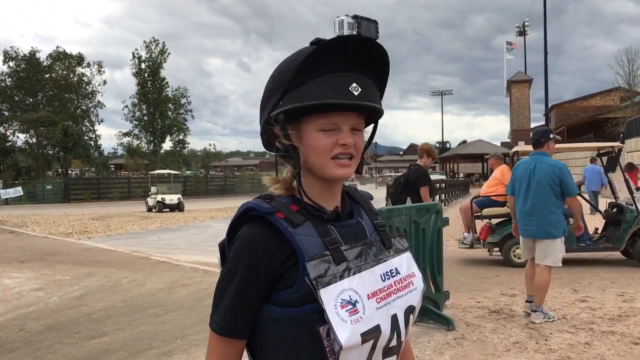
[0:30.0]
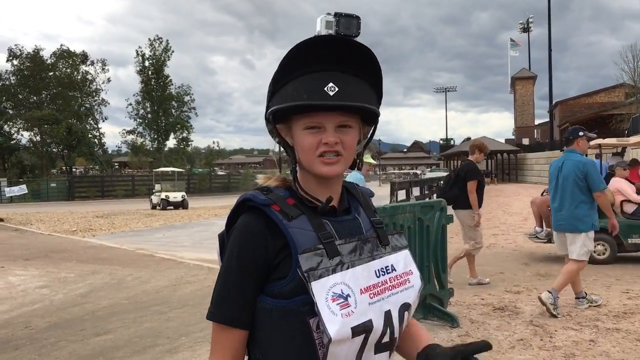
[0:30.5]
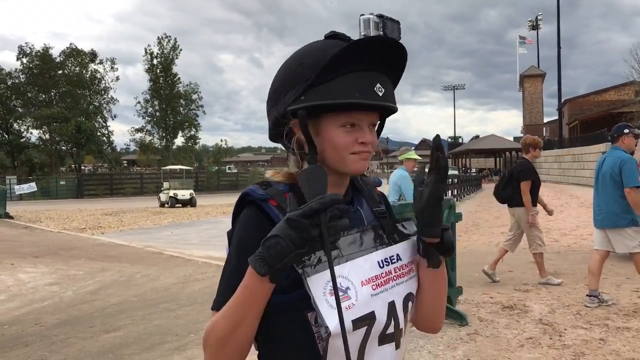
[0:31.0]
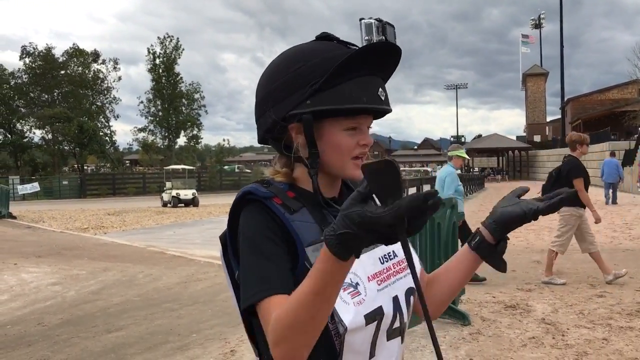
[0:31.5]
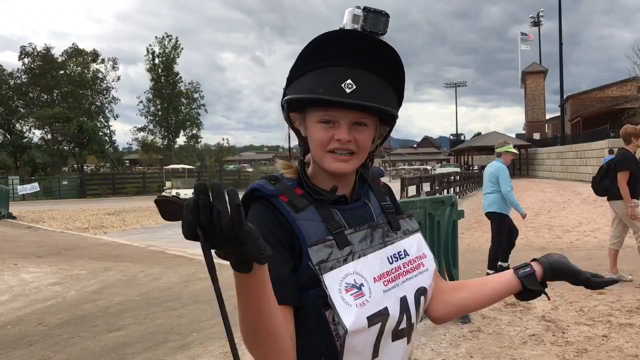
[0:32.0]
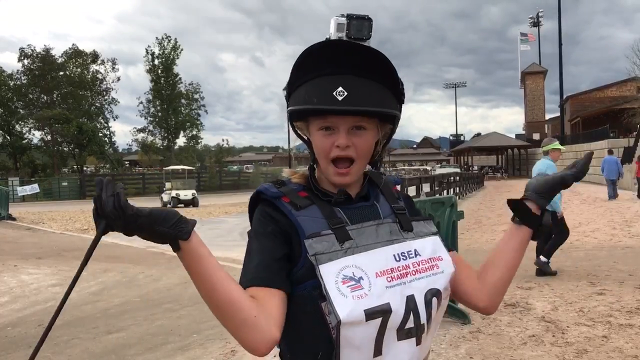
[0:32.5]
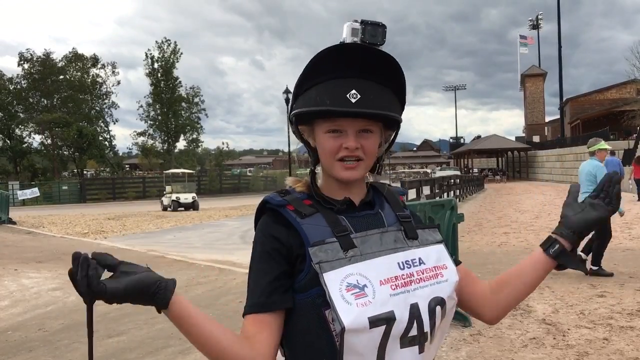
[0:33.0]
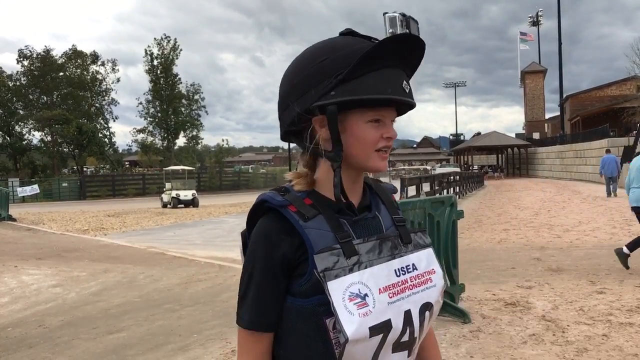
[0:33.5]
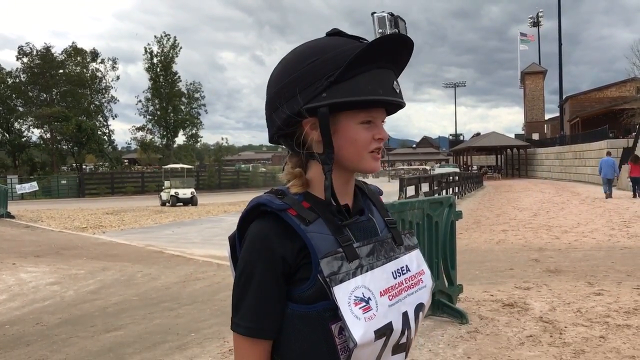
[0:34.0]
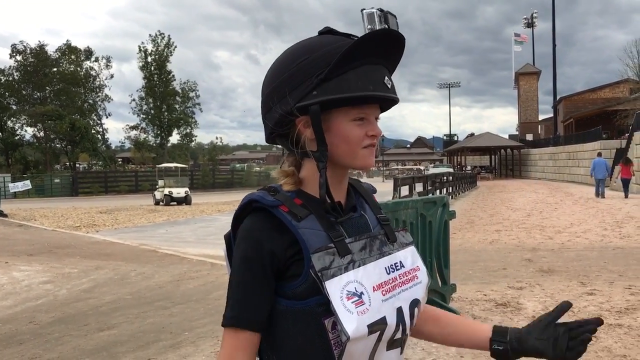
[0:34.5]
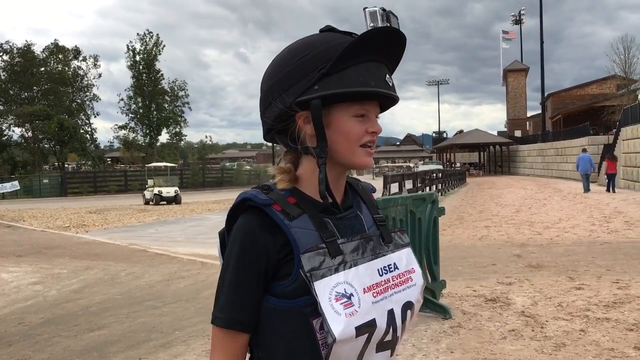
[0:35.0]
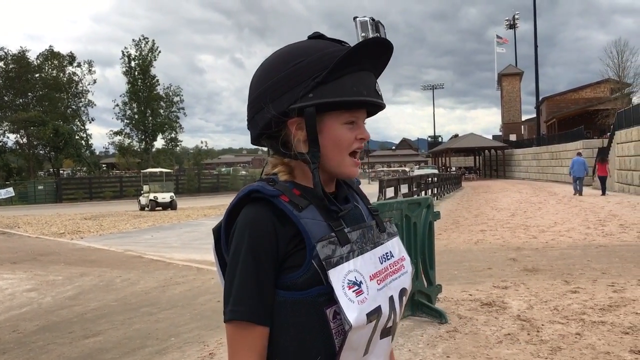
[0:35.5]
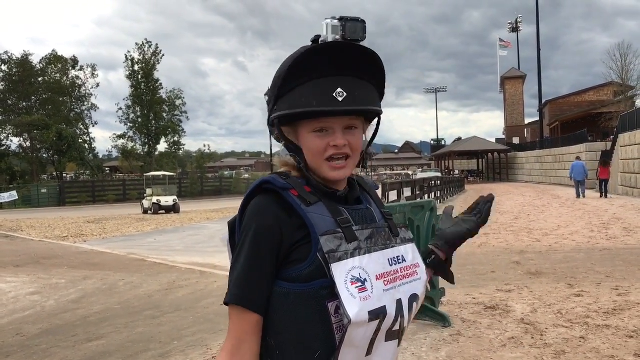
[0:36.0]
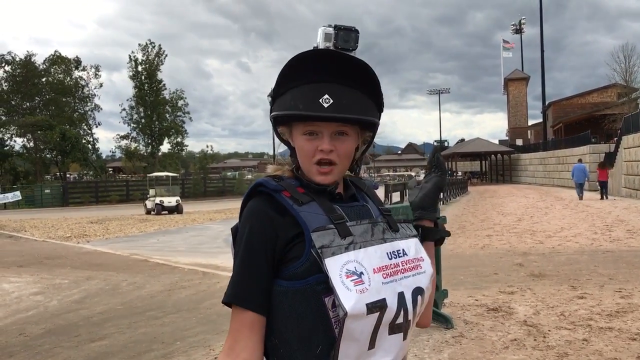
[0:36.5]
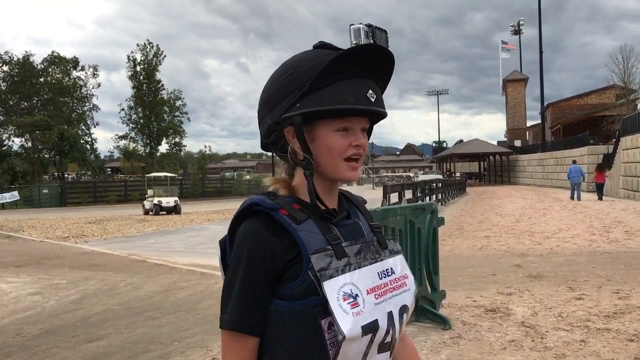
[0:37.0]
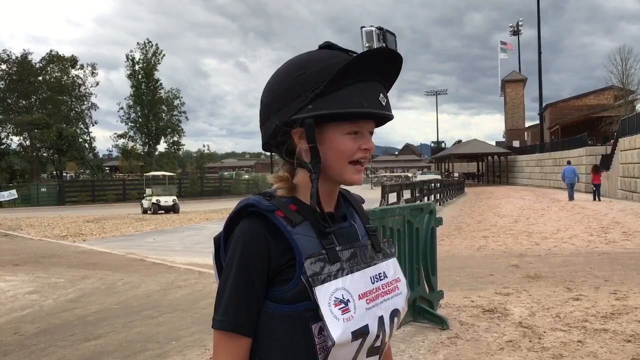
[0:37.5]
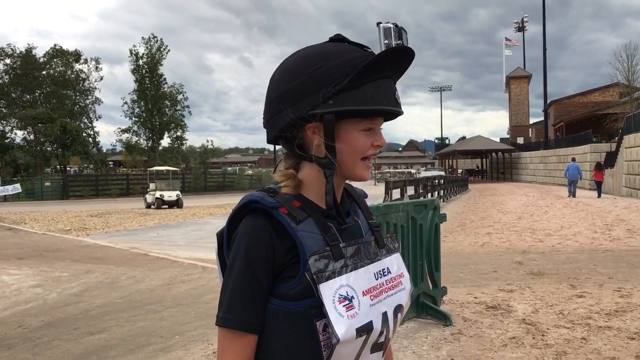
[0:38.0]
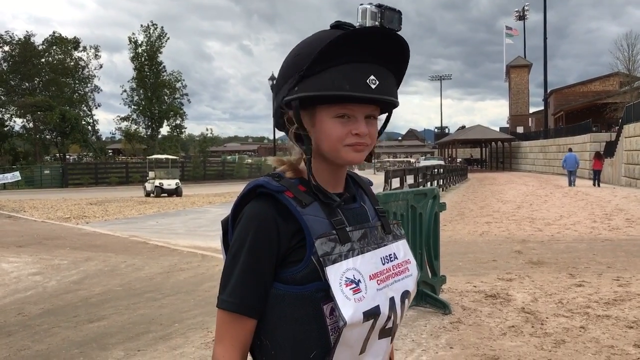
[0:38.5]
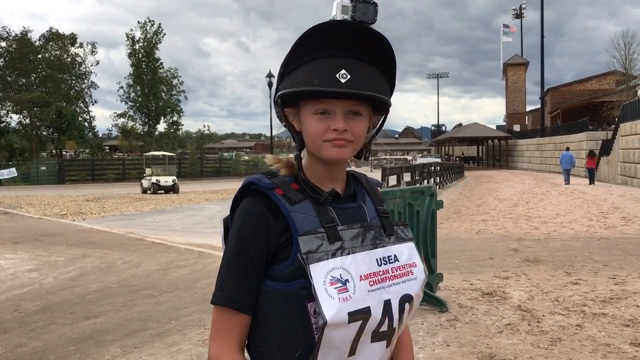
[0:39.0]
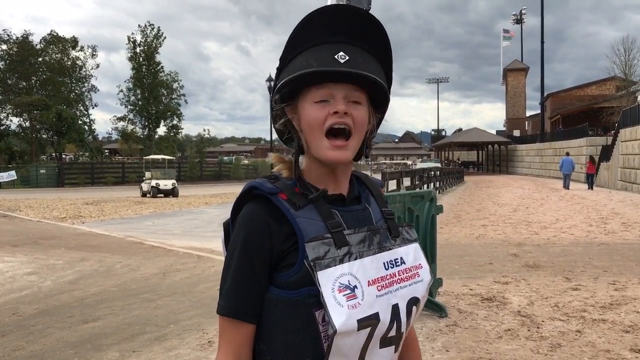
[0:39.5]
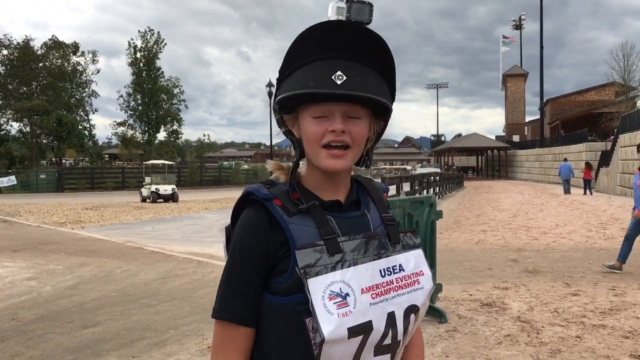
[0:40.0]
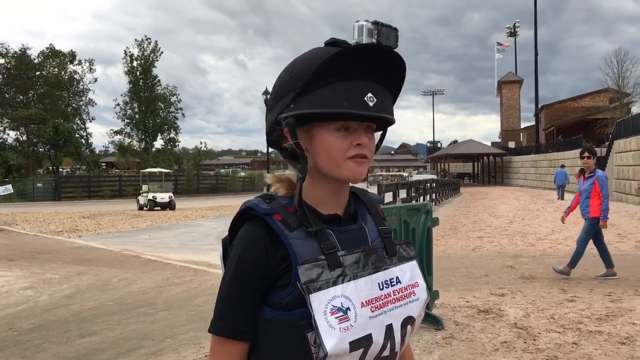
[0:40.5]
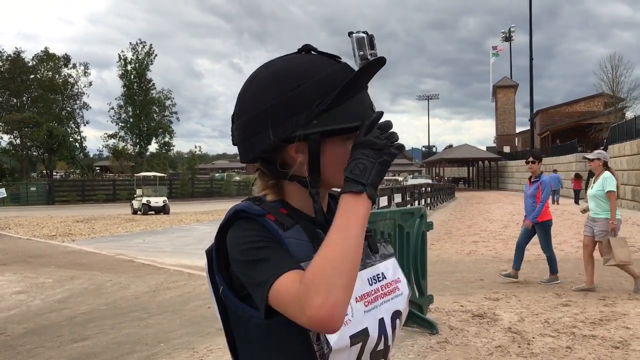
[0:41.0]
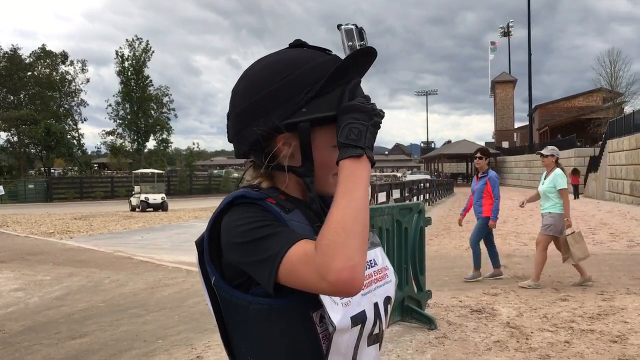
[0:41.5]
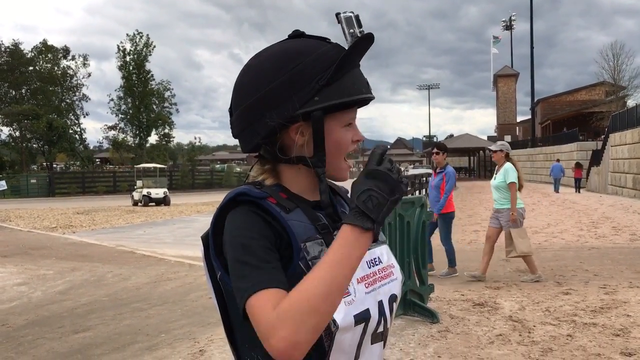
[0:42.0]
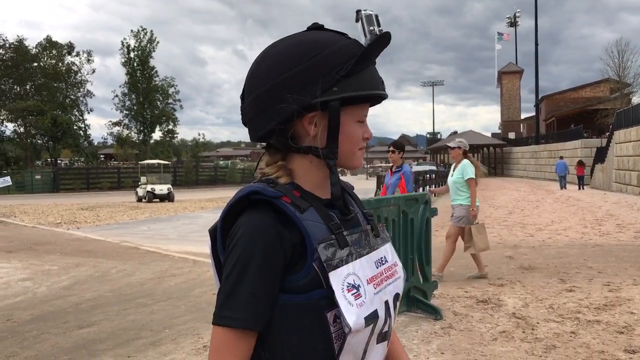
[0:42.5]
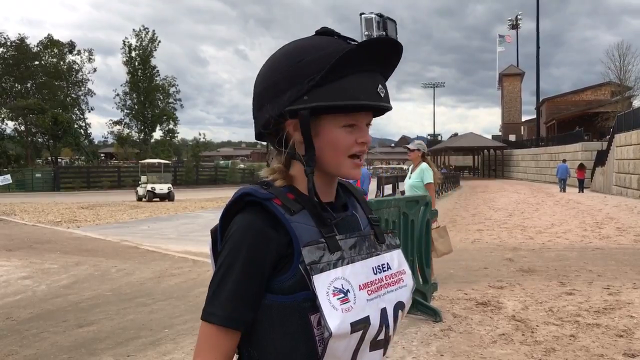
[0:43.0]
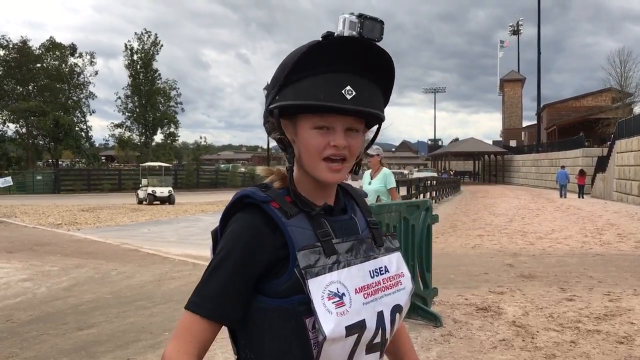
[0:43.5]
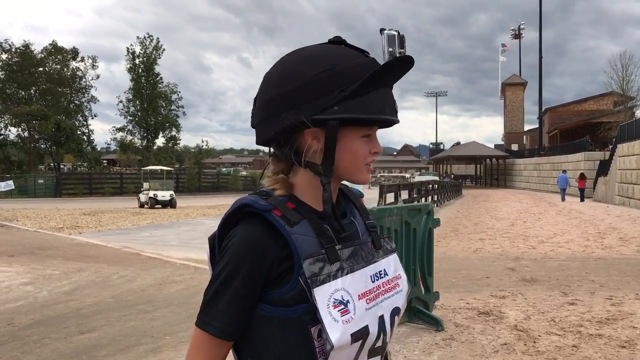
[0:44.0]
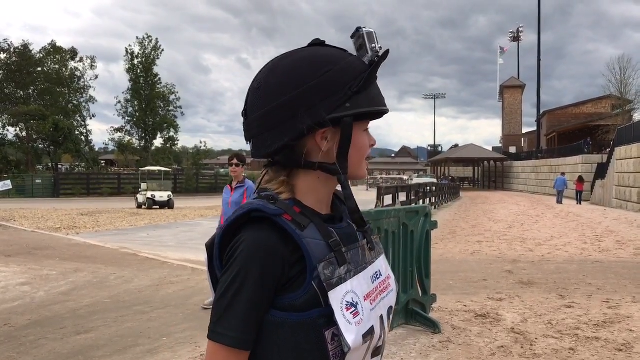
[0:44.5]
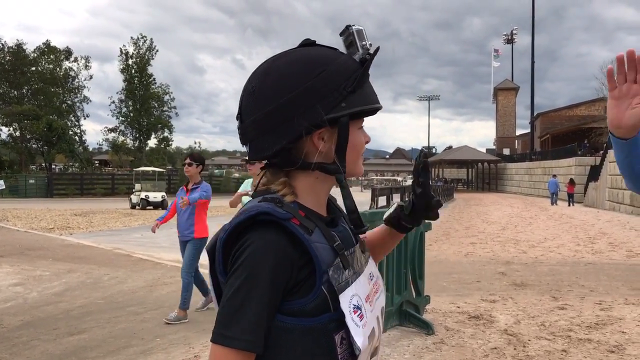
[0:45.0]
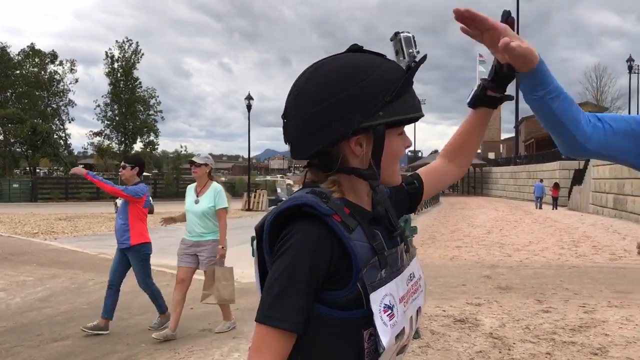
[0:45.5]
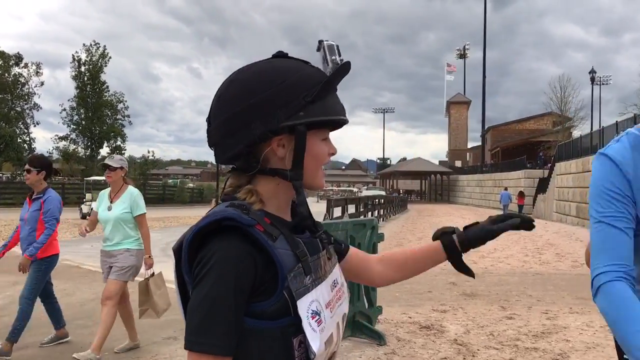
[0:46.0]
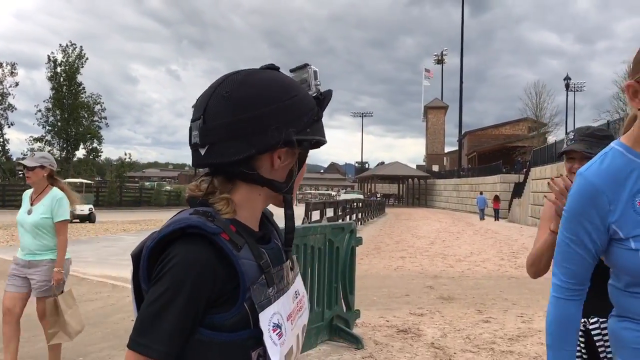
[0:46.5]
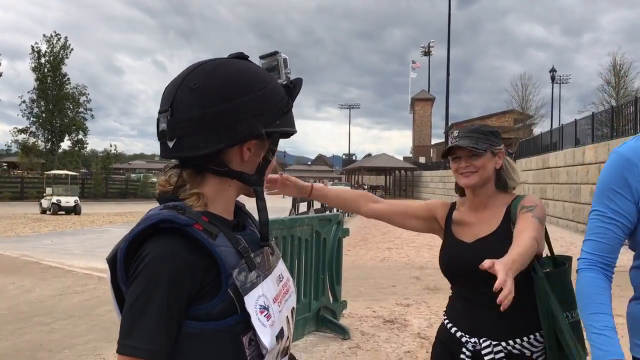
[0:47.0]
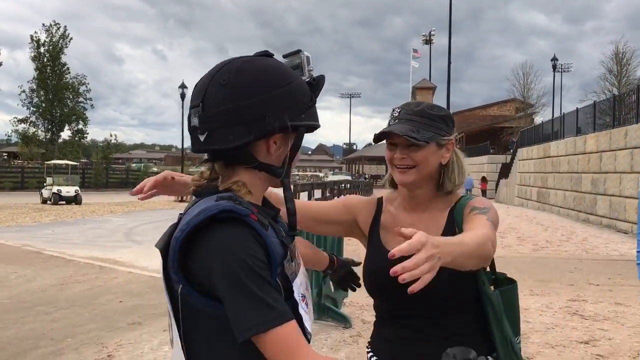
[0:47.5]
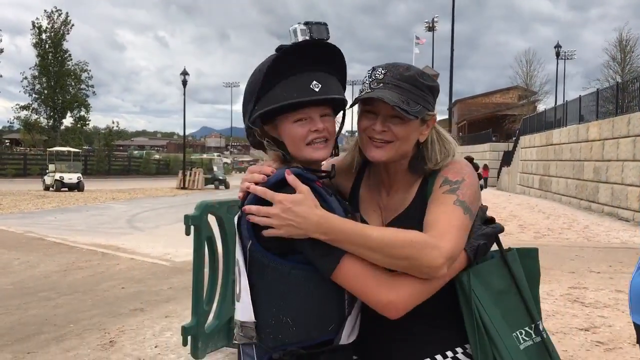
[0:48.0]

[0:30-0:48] The young girl wears the riding helmet with the camera on top, the kind of navy blue chest armor style outfit, and black gloves, and holds the riding crop in her right hand. The white USEA label stuck to her reads "American Eventing Championship 740". Her left hand is raised with the palm facing towards her, and her right arm holds the riding crop. She points her hands outwards towards the horse with palms facing upwards, opens her arms wide as she turns to the camera, then puts her arms down by her side as she looks back at the horse. She takes a deep breath, lifts her left hand up to about her shoulder and brings it back down to her side. She looks at the camera and nods expressively, turns her head back towards the horse, adjusts her helmet with her right hand and brings the hand down by her side, and nods again several times. She high-fives the woman wearing blue, whose arm is visible, her left hand meeting the woman's right hand. Then the woman in black wearing the cap walks over and gives her a hug as the scene ends.